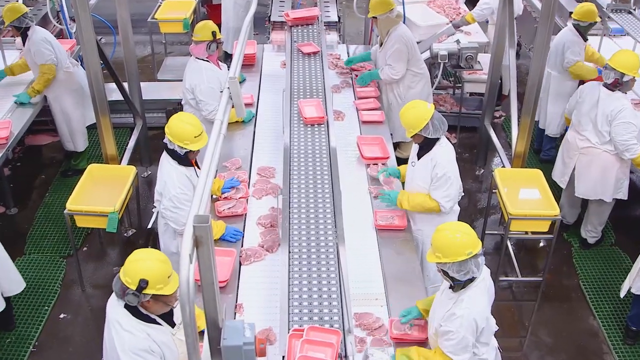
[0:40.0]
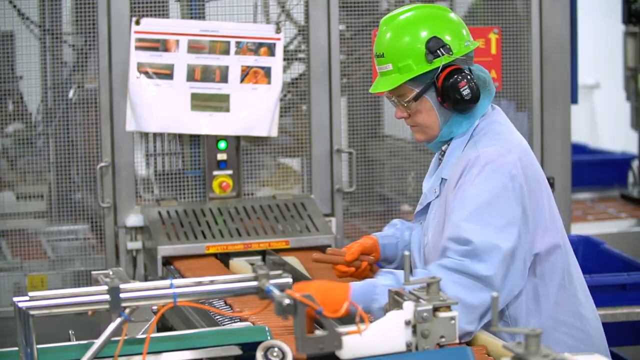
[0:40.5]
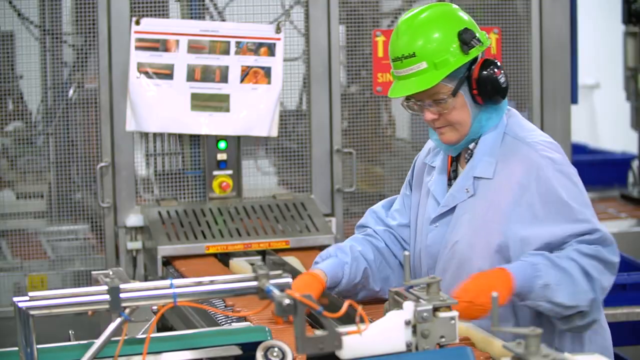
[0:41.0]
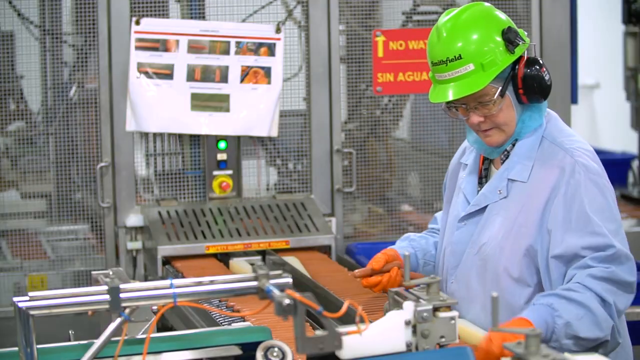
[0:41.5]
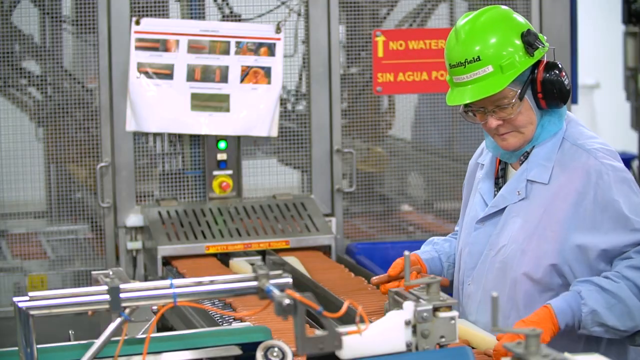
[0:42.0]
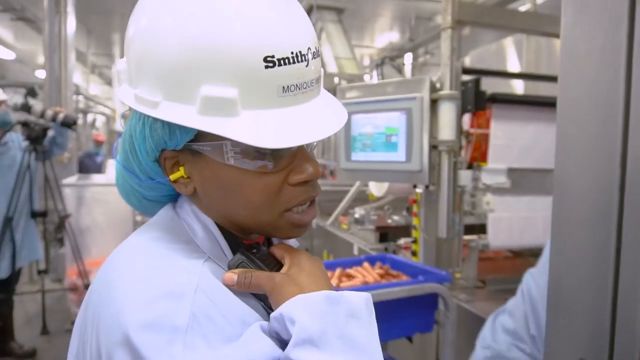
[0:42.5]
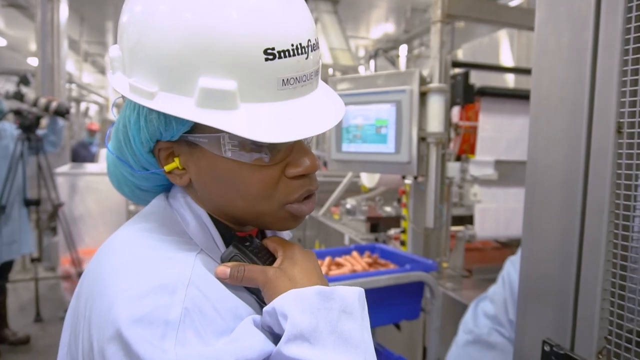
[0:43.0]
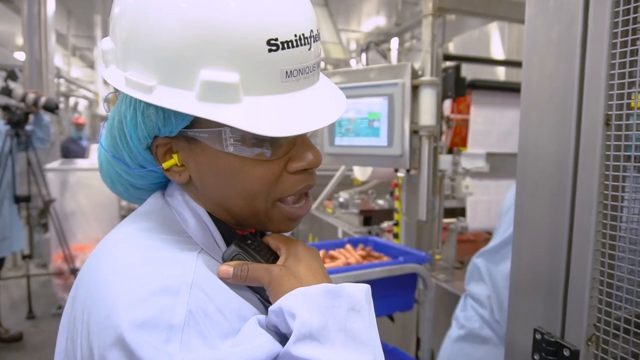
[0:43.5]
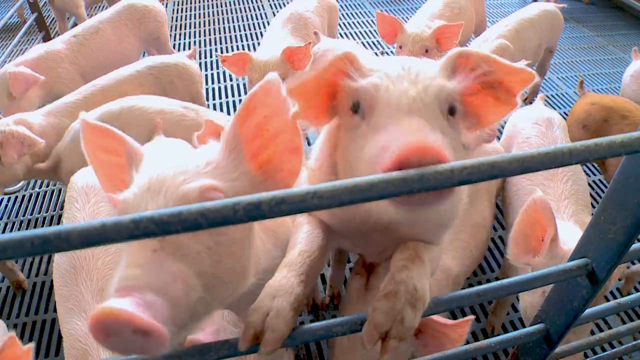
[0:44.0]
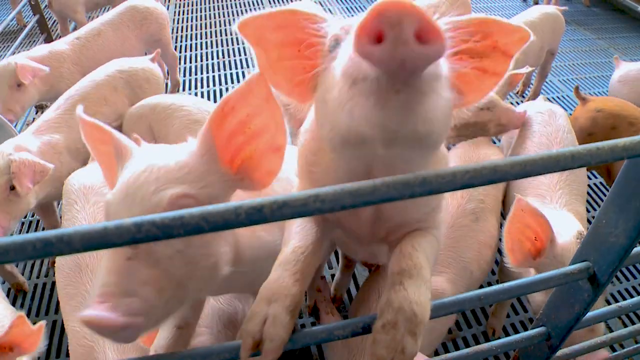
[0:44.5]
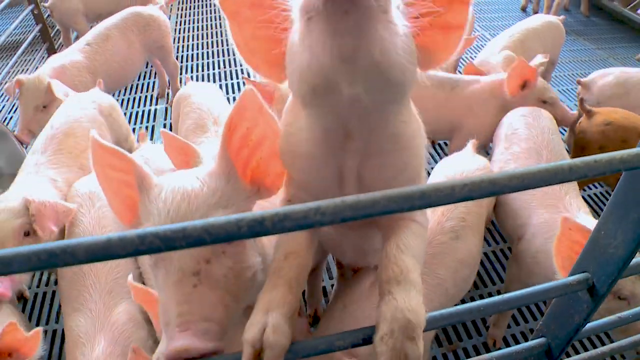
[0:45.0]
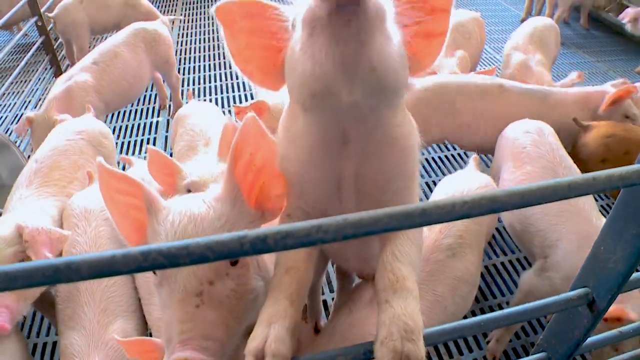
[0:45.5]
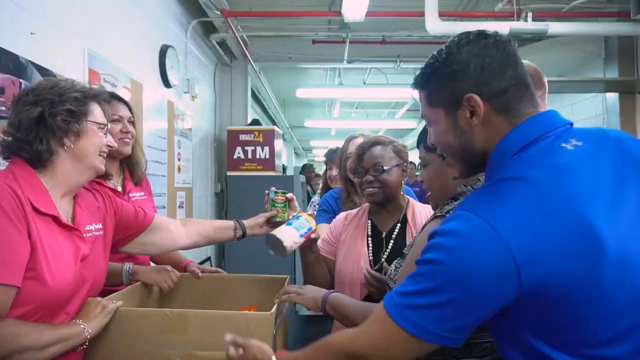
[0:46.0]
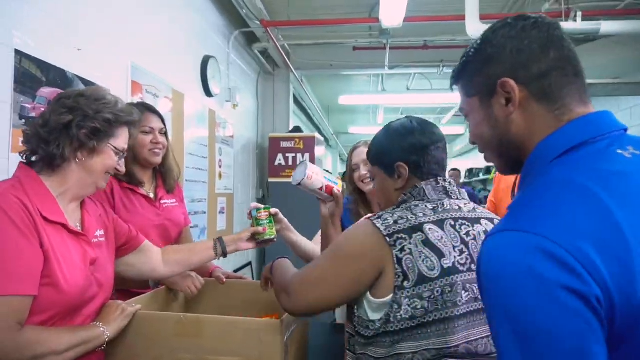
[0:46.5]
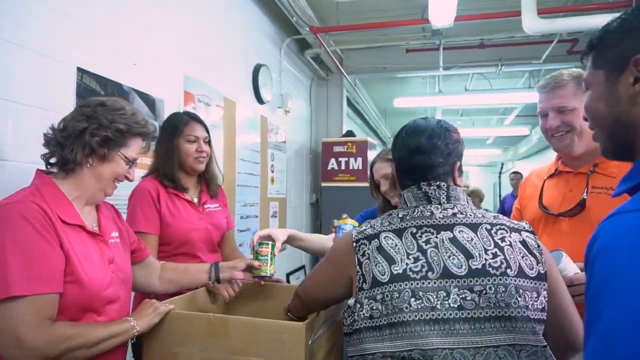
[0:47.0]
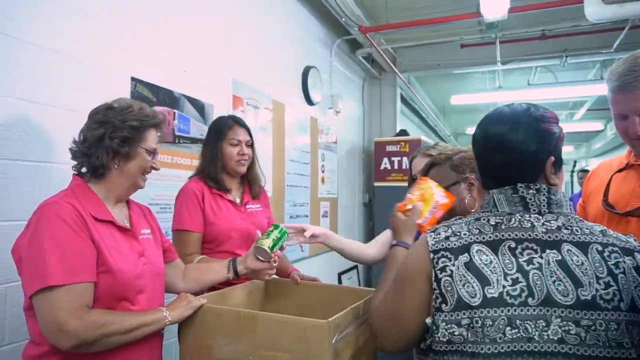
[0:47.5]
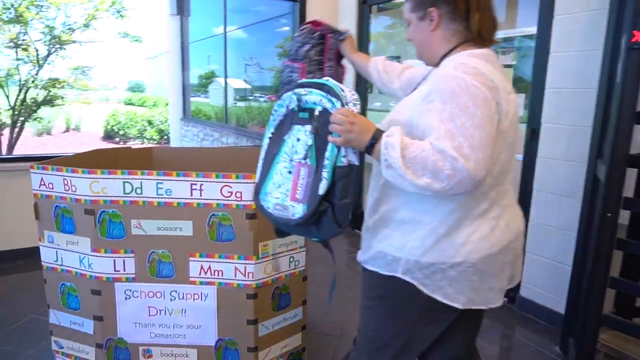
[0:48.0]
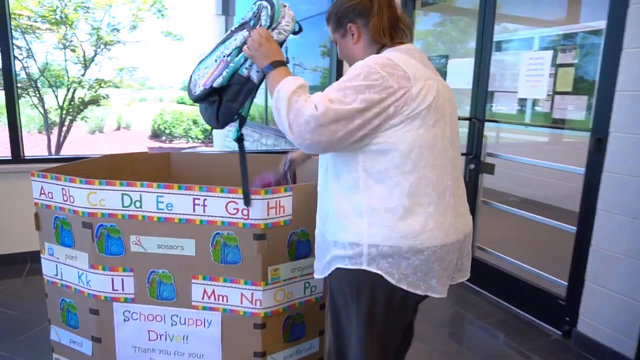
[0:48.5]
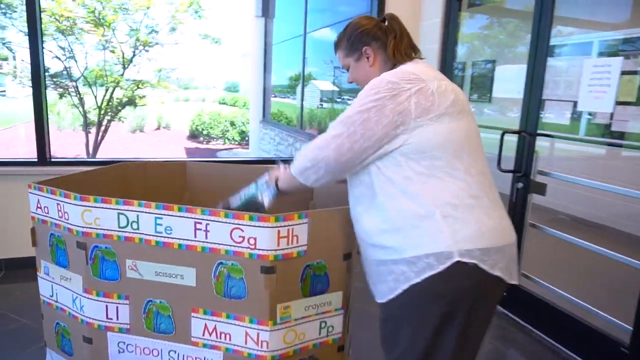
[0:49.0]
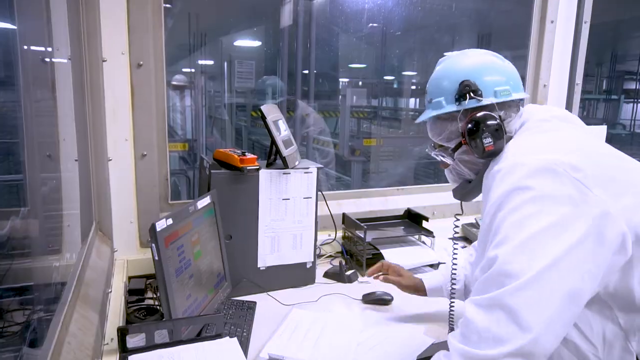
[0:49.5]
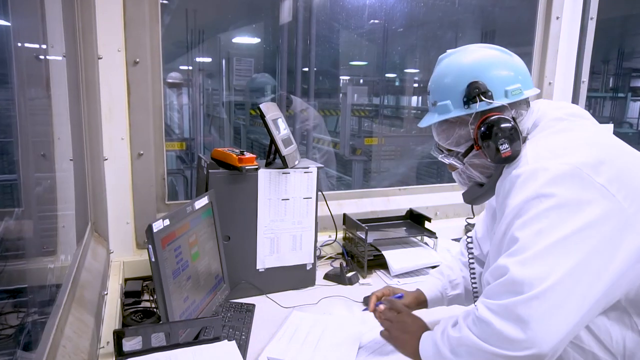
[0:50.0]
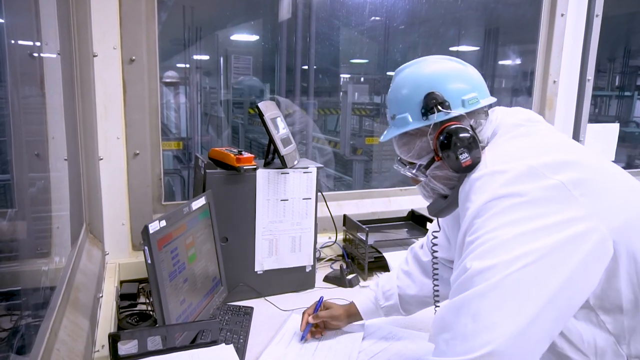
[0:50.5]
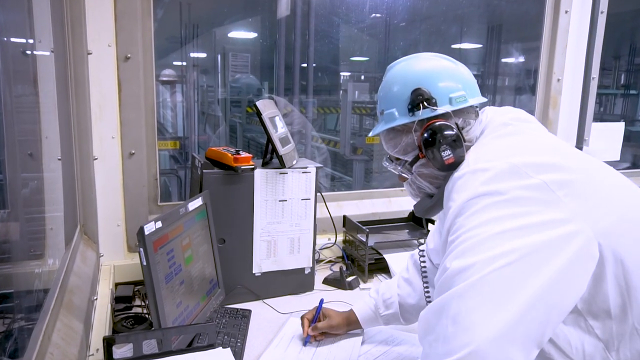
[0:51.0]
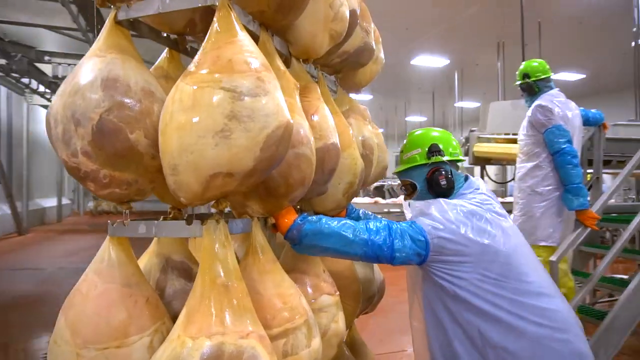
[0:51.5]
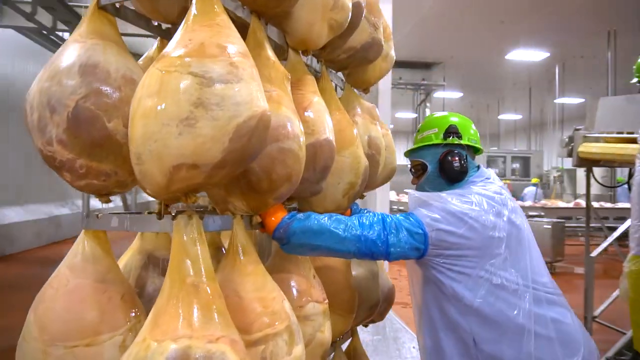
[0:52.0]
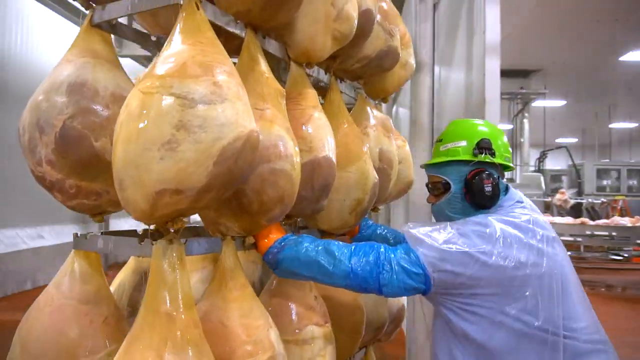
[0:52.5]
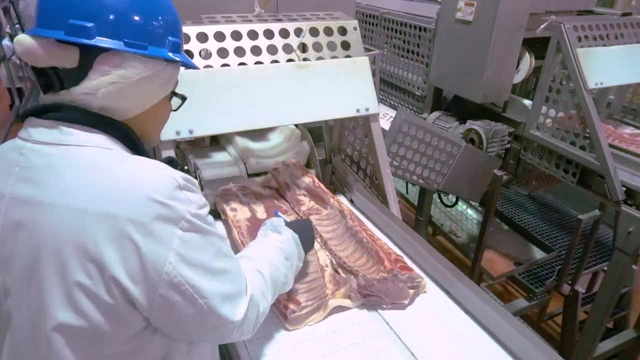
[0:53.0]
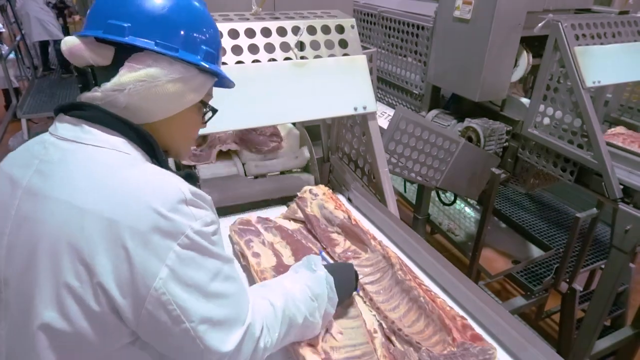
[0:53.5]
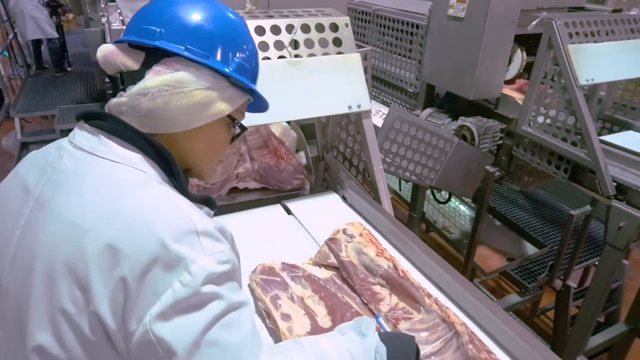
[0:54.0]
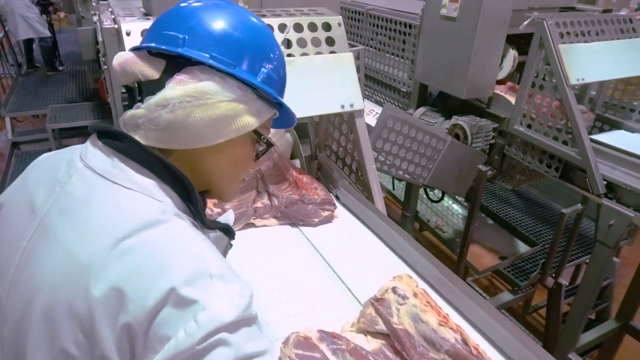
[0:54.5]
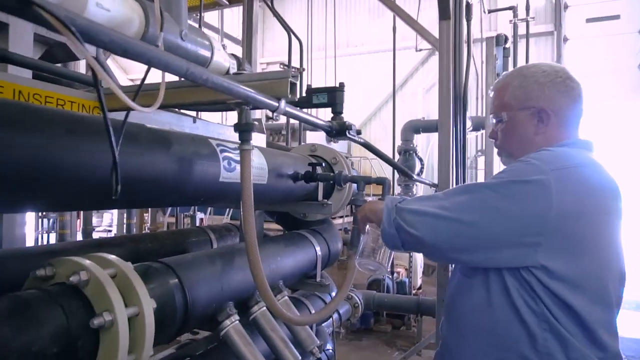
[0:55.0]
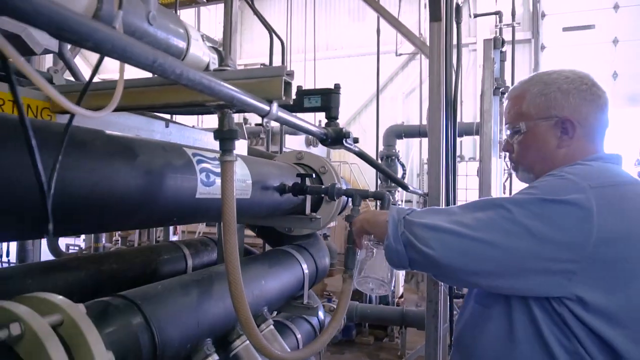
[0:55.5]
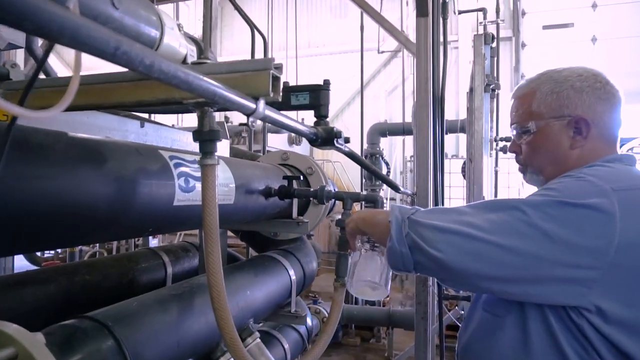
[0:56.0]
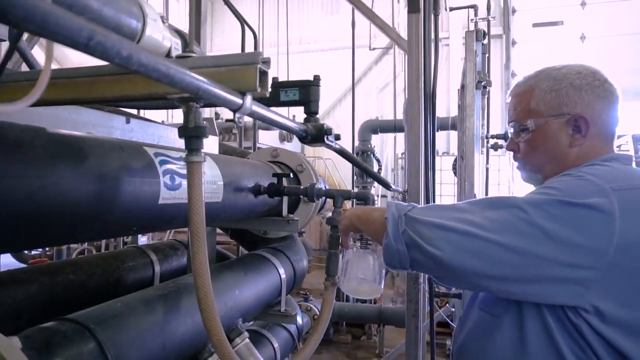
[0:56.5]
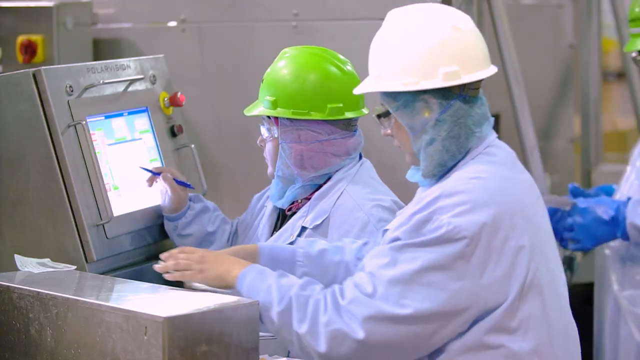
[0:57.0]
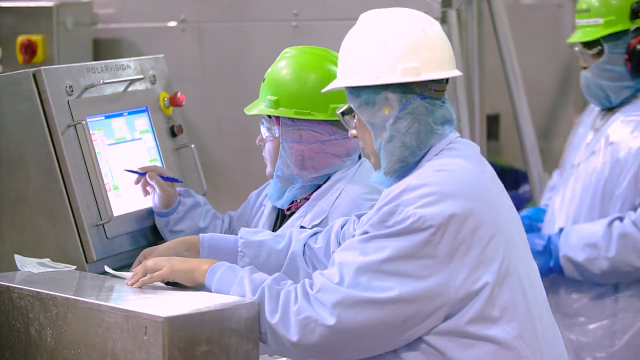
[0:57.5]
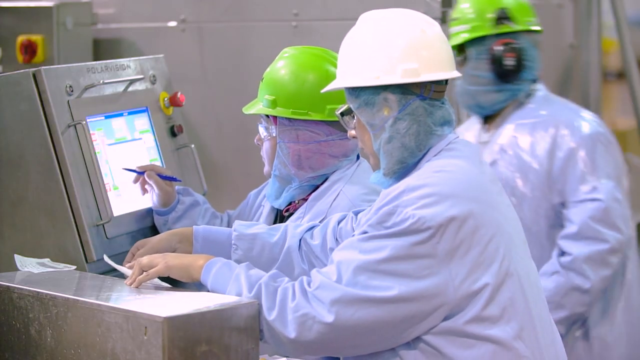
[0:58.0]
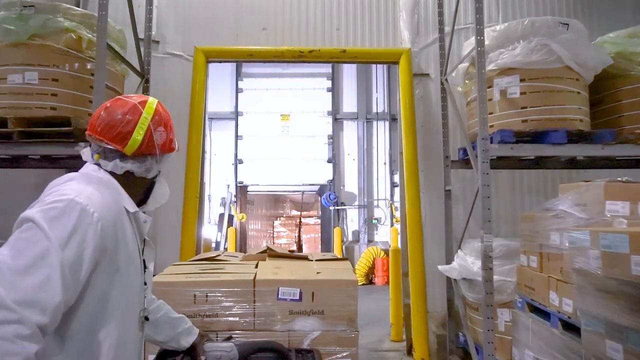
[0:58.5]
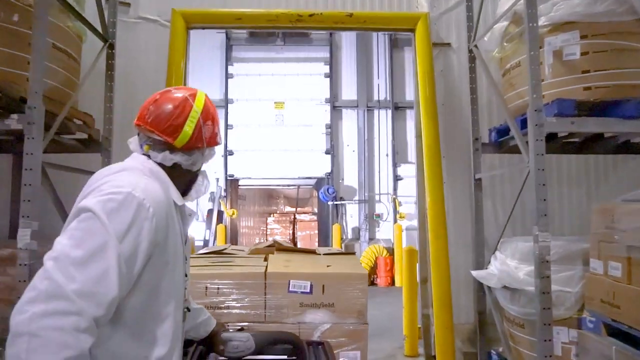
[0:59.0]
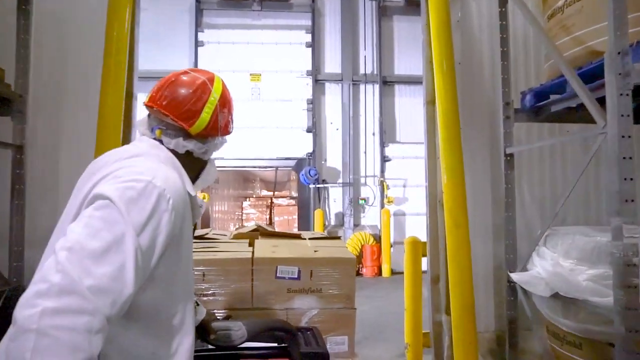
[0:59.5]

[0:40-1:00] The people at the conveyor belt all seem to have yellow hats on, while people in other areas of the warehouse wear different colored hats; the hats have the brand name Smithfield on the front. A woman in a bright green hat, a blue overall and orange gloves works at a bench. An individual with a hairnet and a white hard hat with Smithfield on it speaks close to the camera. Many pigs and piglets are in a cage. Two women in pink polos hand out tins to a variety of people, and a woman in a white shirt puts some school bags into a big box. Back in the warehouse, people deal with lots of meat in various areas, people deal with machinery, and people cart pallets of boxes into different areas.